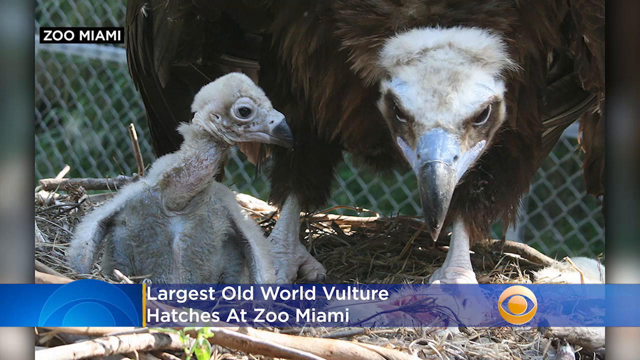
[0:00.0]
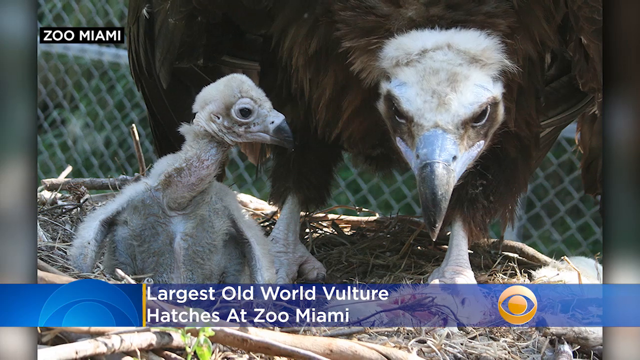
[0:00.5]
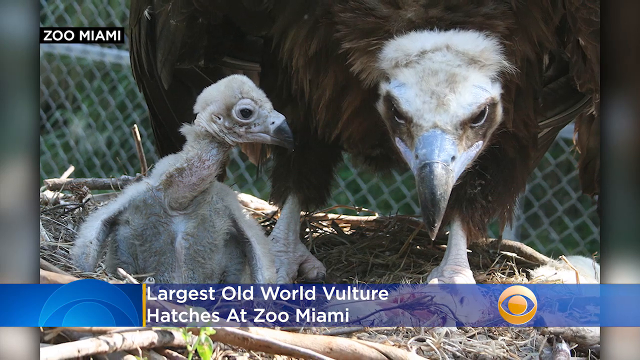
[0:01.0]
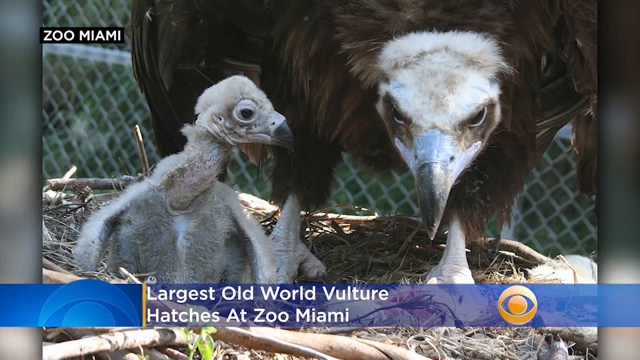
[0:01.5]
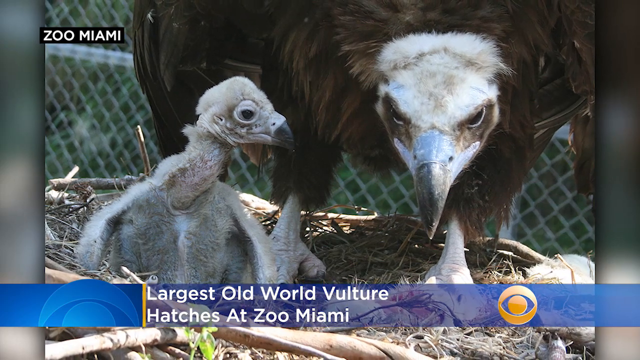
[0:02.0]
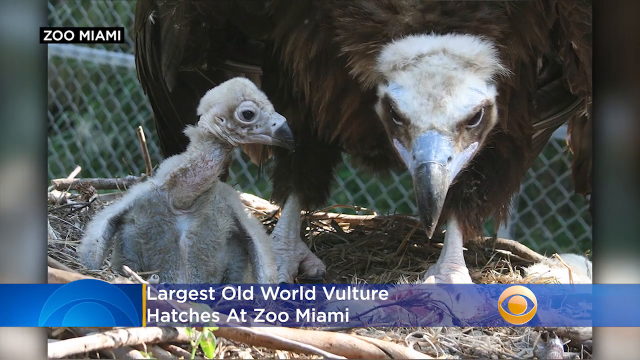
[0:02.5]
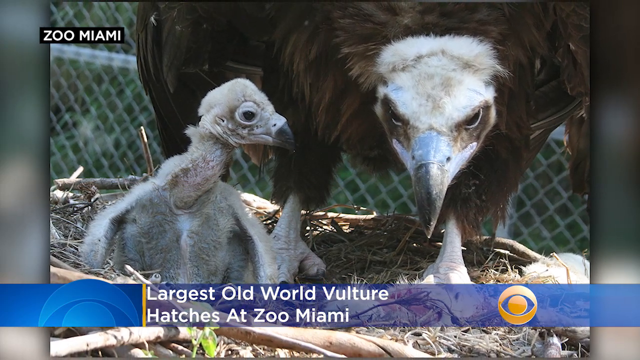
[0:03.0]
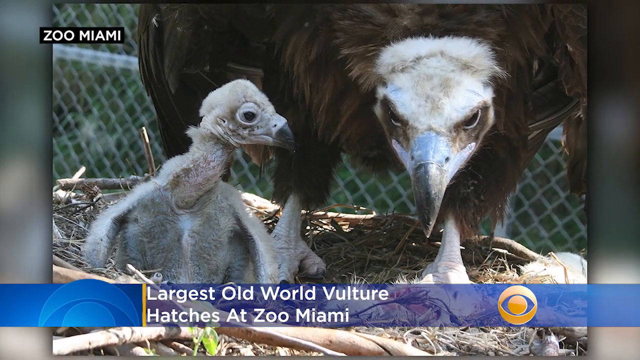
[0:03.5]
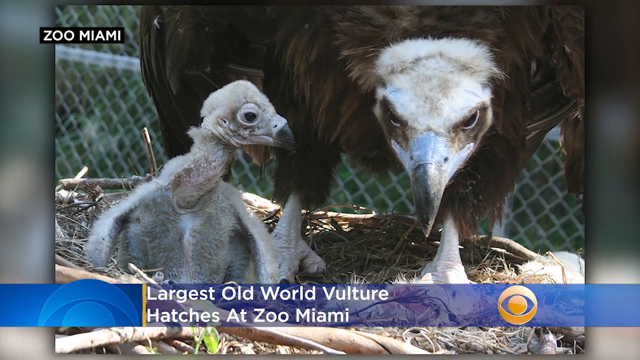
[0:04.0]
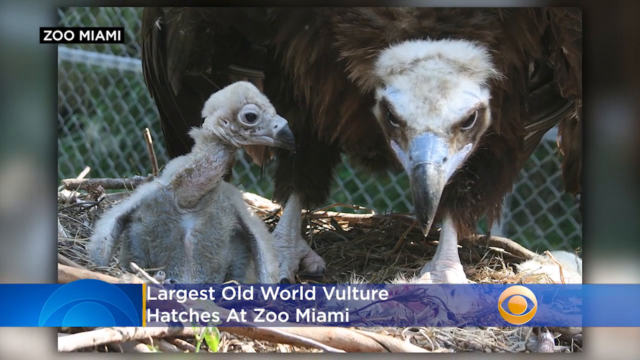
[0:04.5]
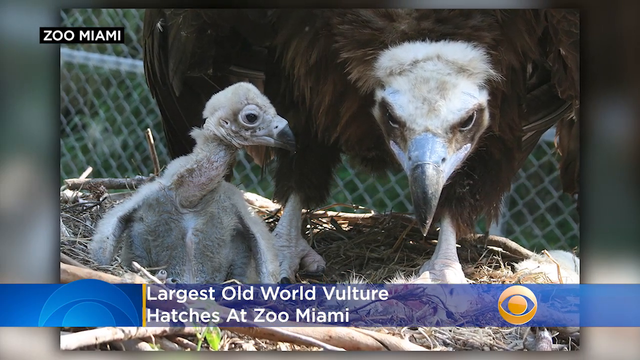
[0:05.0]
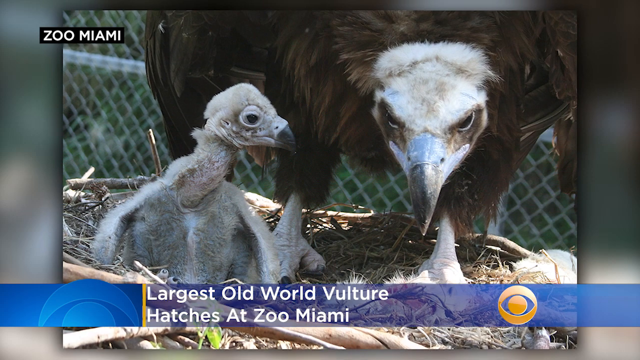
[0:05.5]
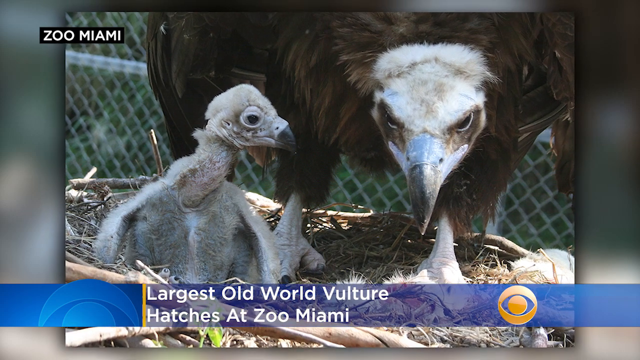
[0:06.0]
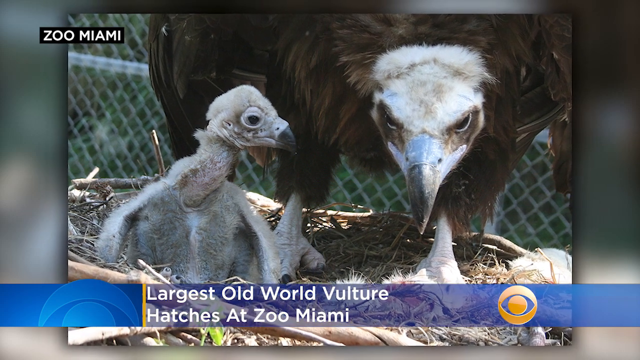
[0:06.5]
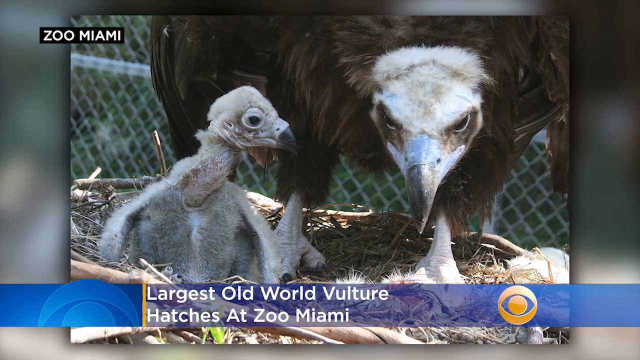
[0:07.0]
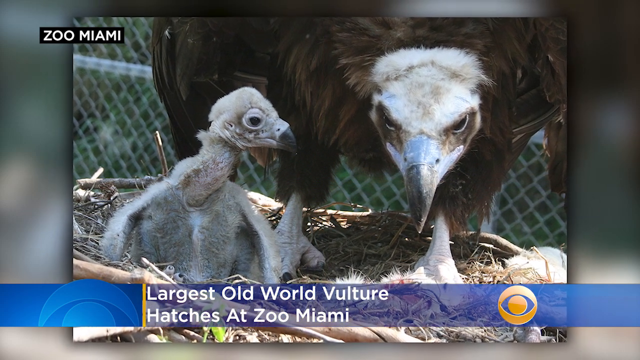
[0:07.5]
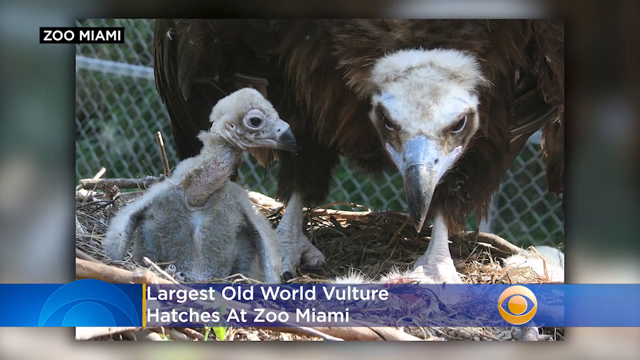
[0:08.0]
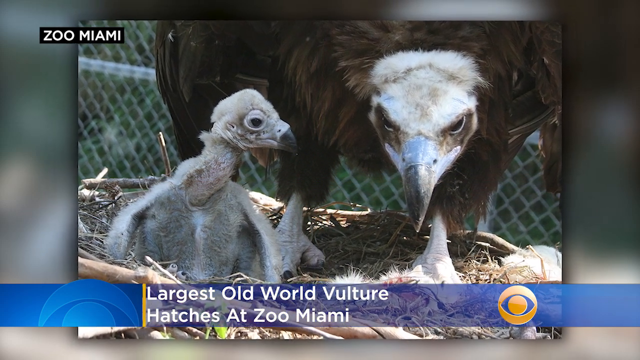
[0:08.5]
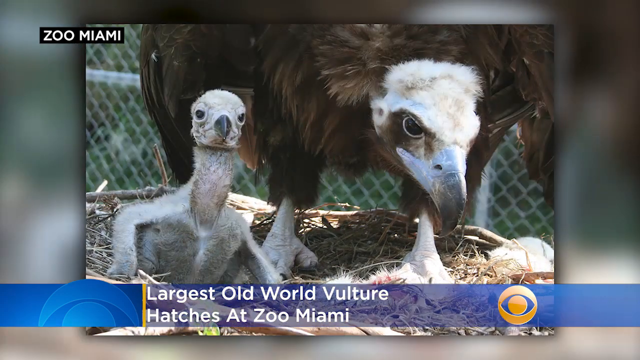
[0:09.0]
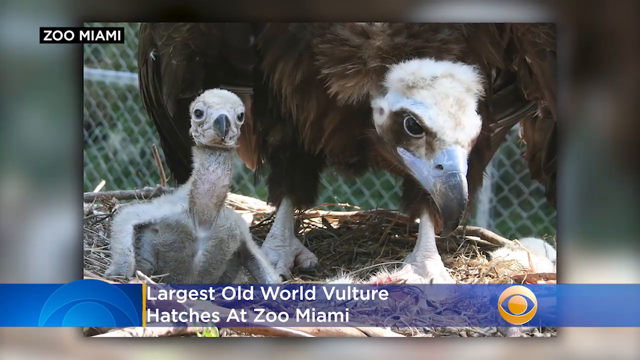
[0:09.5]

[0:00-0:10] A still image shows a large bird that appears to be a vulture or an osprey standing in a nest above a baby bird. The birds are clearly larger than many other species of birds. The baby bird looks at the full-grown bird expectantly. A graphic at the top left says "Zoo Miami." The lower-third caption at the bottom reads "Largest old world vulture hatches at Zoo Miami," with the CBS logo on the far right of the lower-third graphic. The image then cuts to another angle of the same birds.